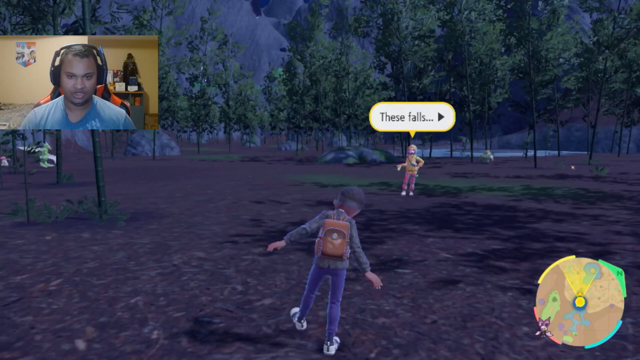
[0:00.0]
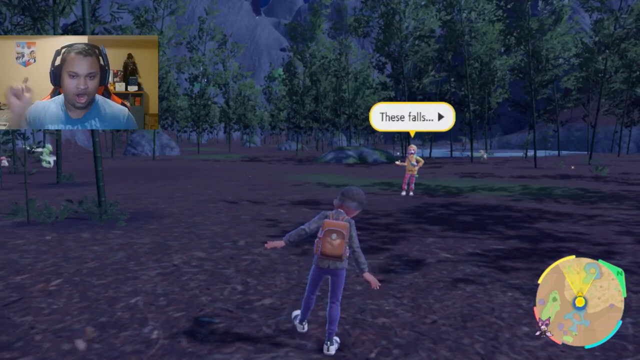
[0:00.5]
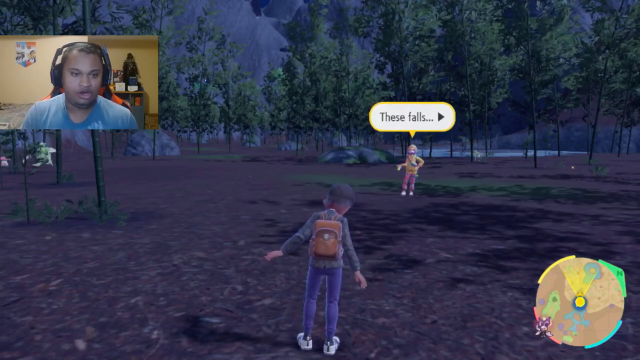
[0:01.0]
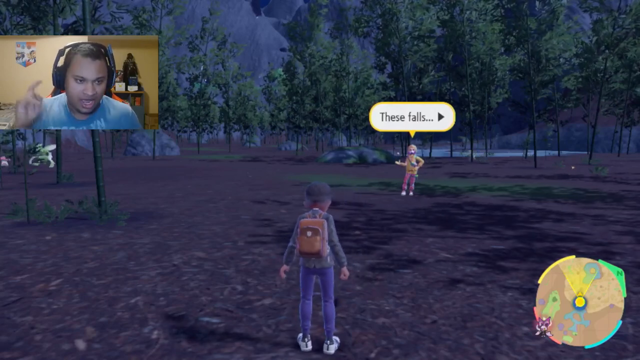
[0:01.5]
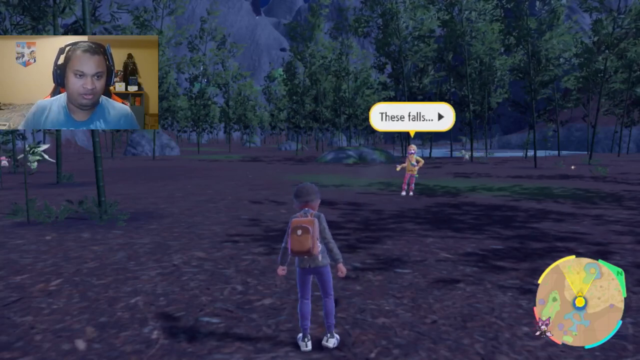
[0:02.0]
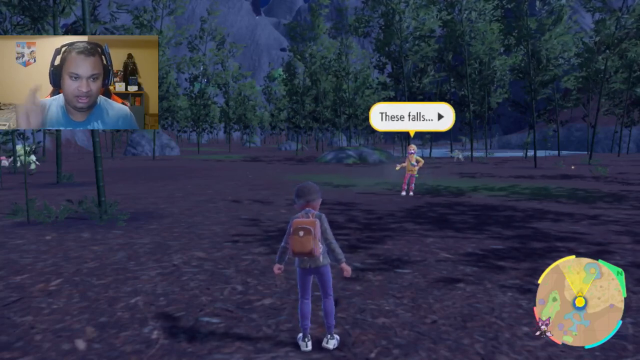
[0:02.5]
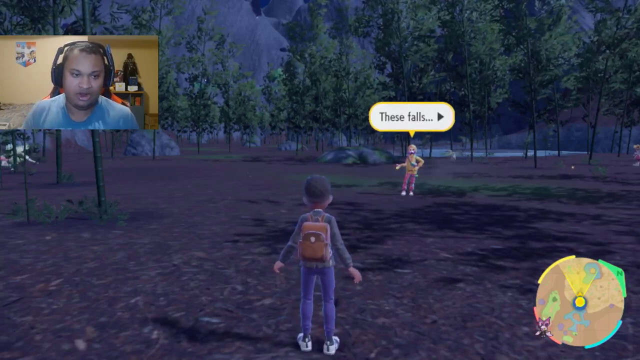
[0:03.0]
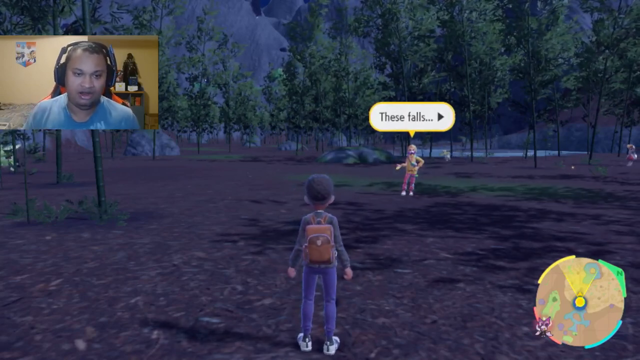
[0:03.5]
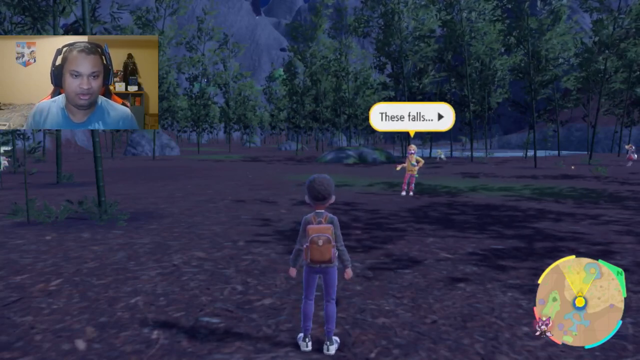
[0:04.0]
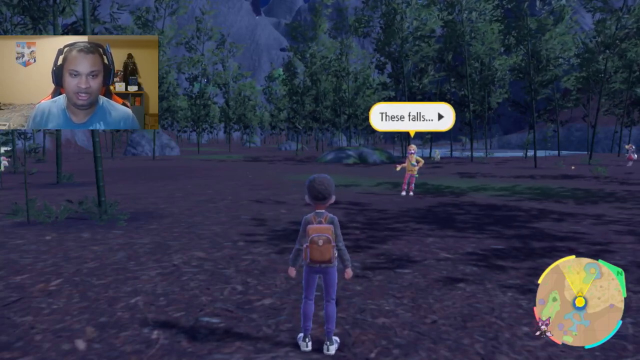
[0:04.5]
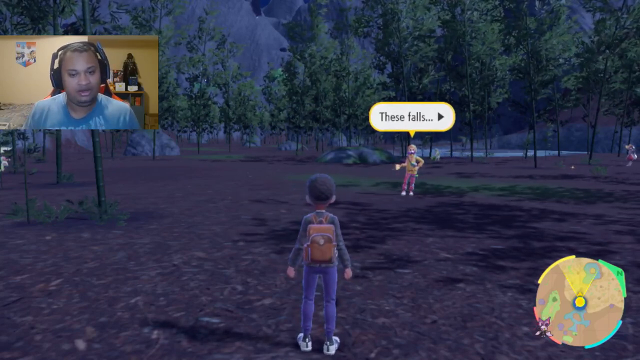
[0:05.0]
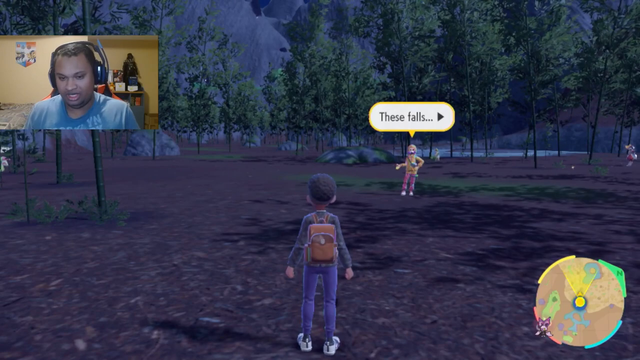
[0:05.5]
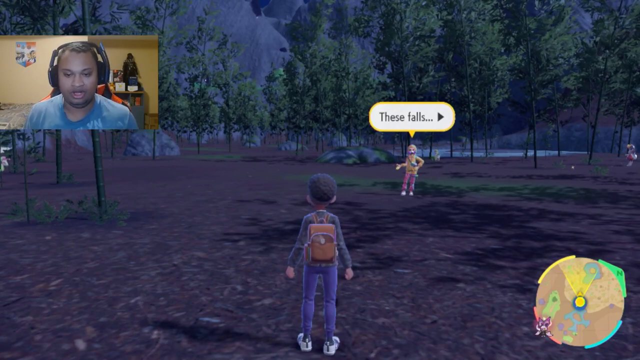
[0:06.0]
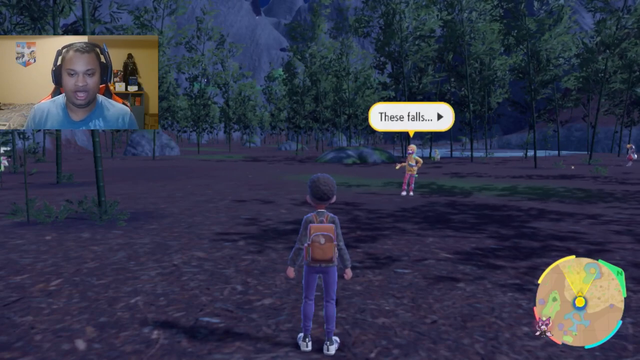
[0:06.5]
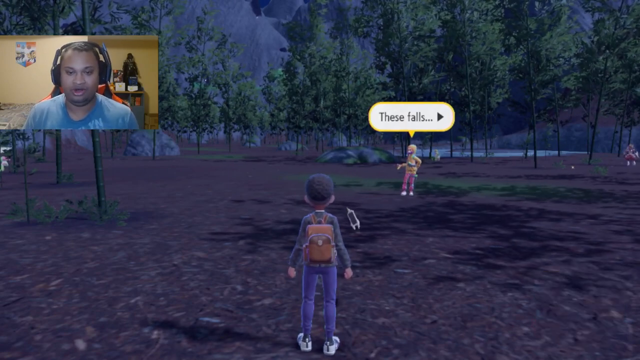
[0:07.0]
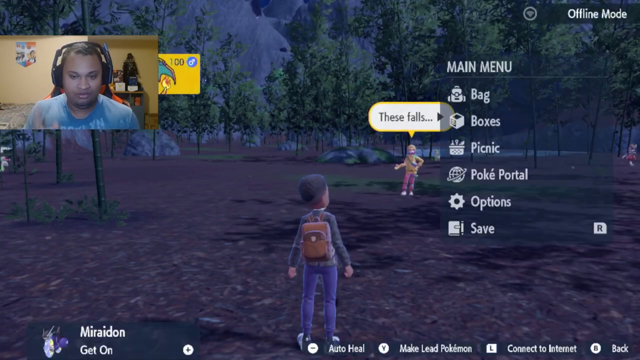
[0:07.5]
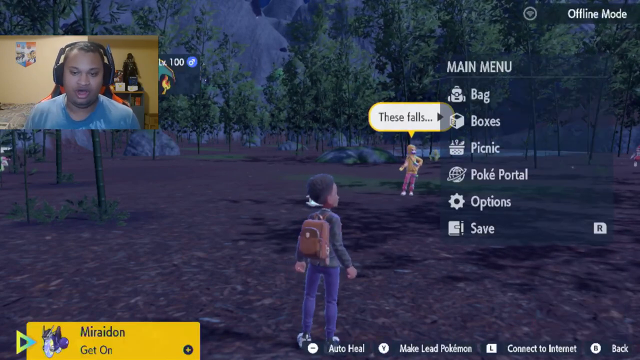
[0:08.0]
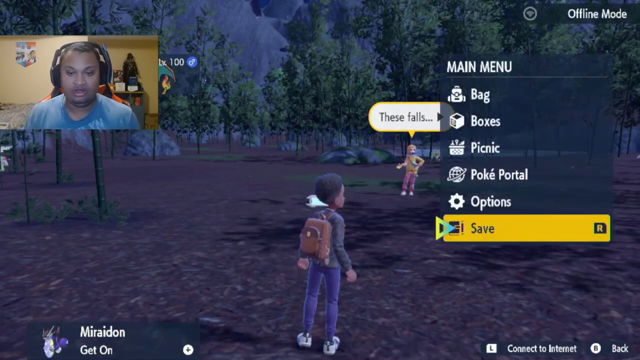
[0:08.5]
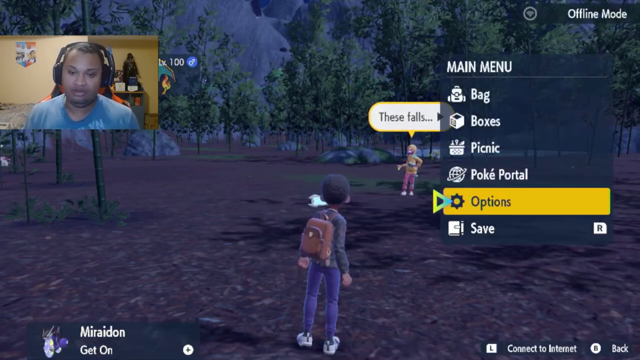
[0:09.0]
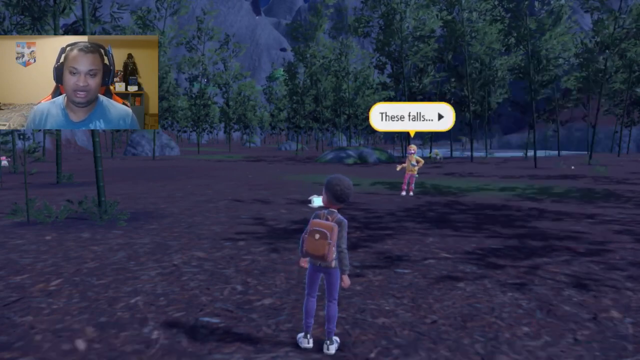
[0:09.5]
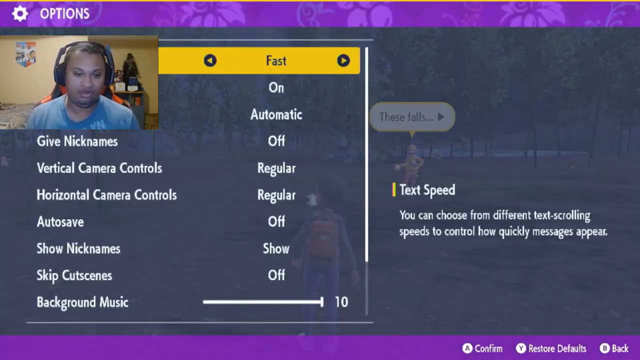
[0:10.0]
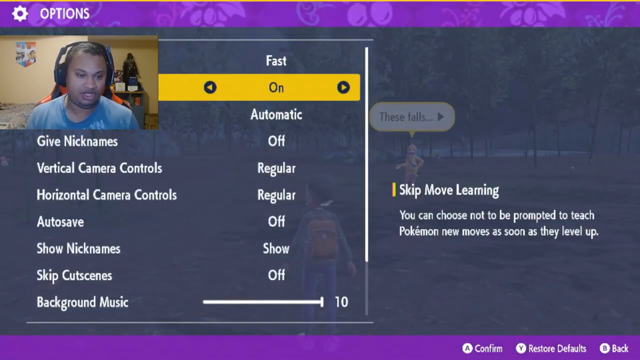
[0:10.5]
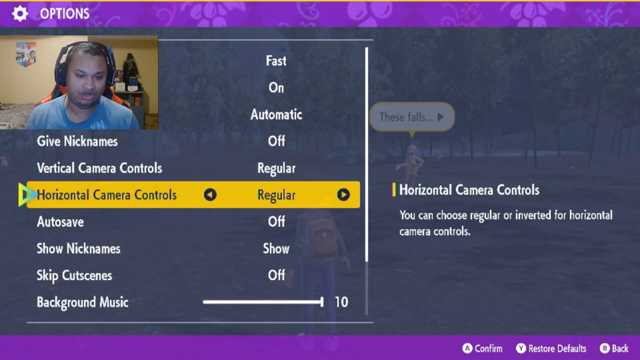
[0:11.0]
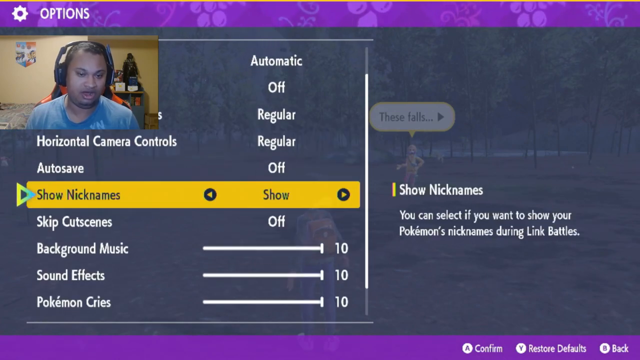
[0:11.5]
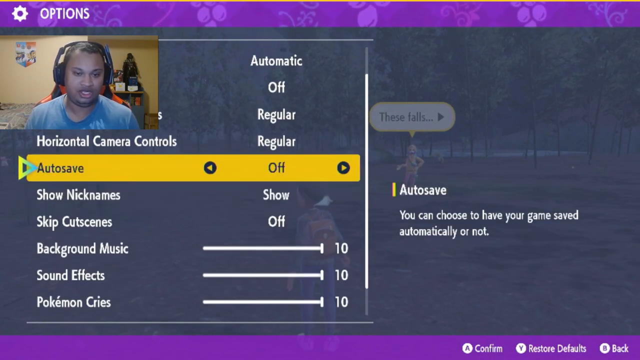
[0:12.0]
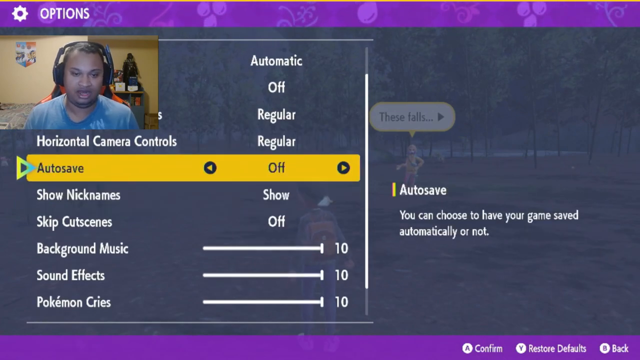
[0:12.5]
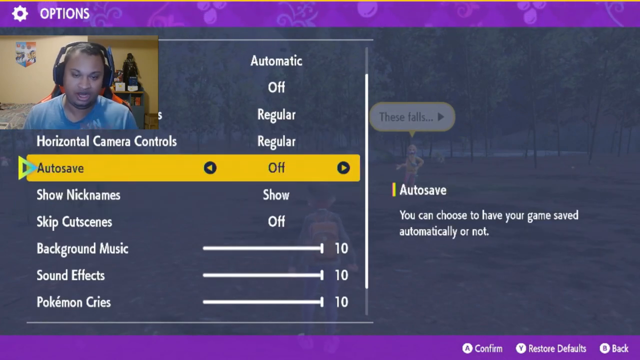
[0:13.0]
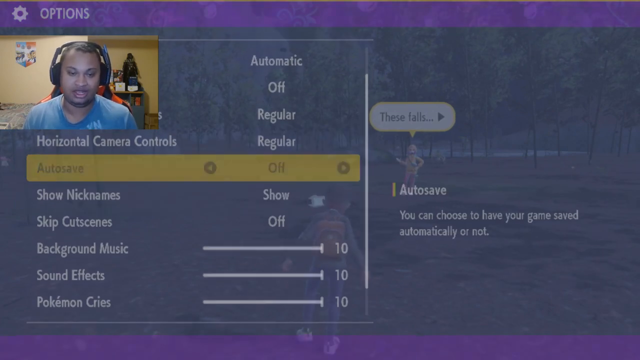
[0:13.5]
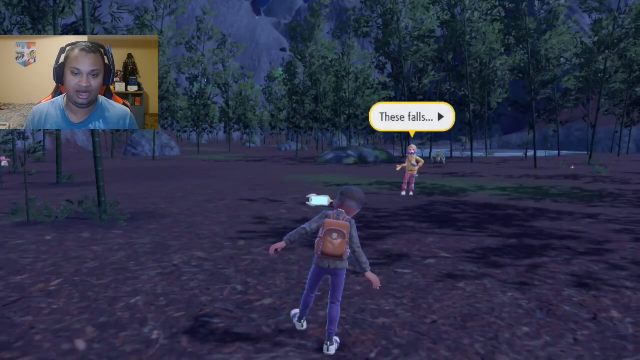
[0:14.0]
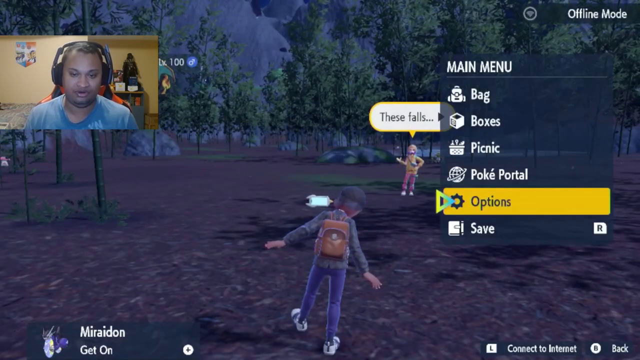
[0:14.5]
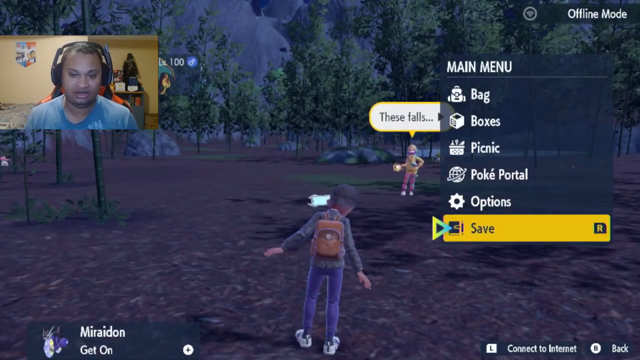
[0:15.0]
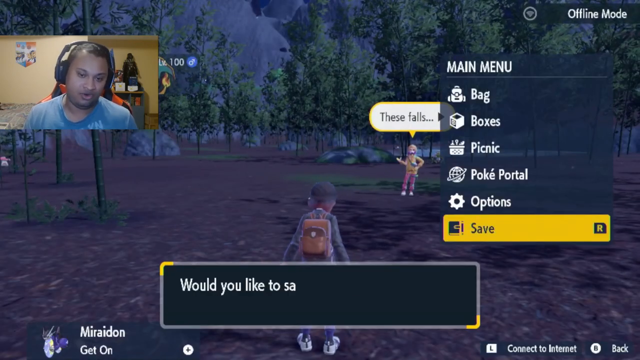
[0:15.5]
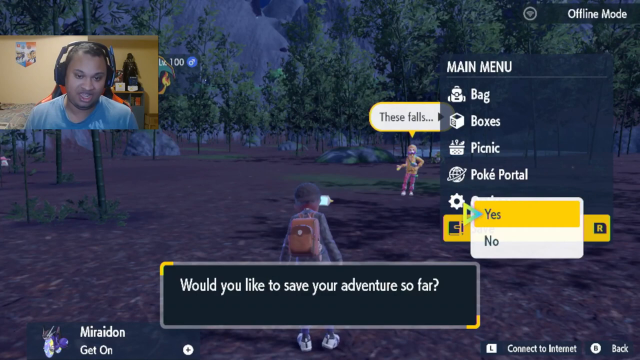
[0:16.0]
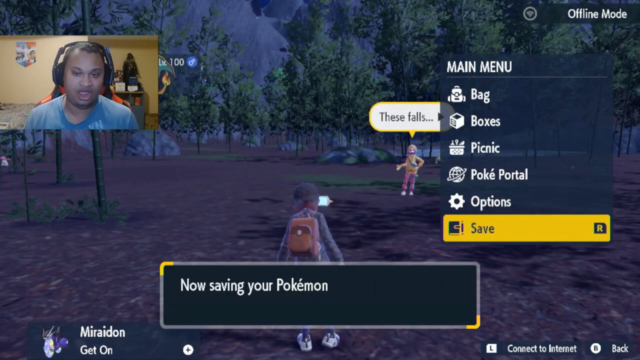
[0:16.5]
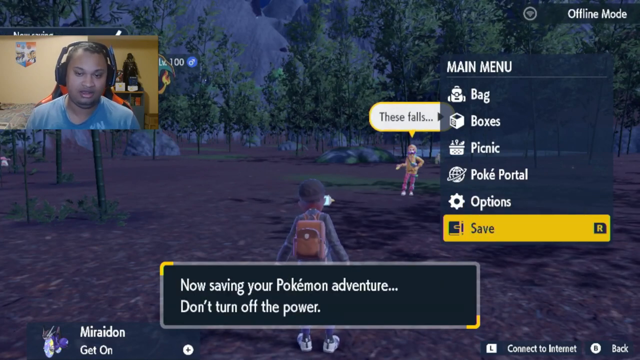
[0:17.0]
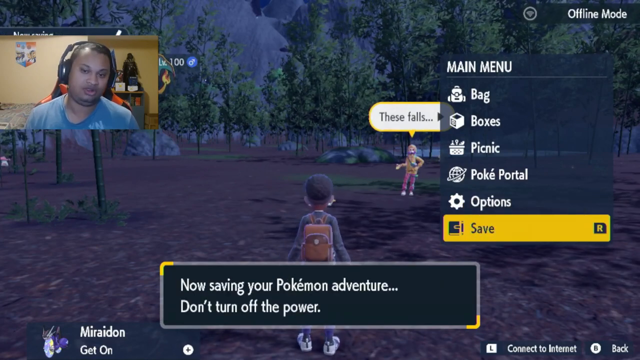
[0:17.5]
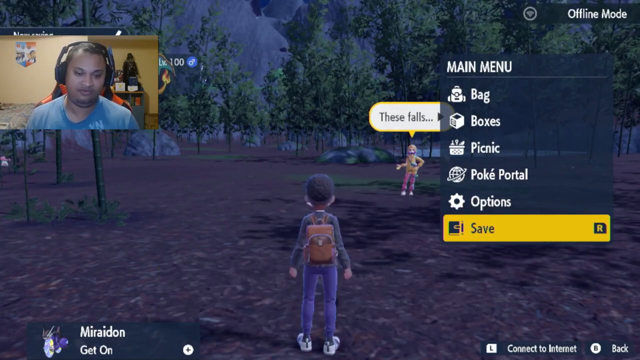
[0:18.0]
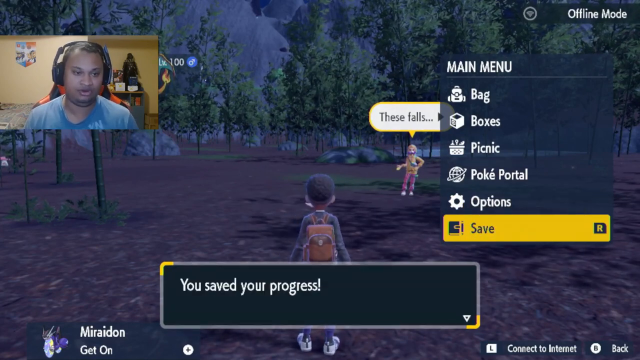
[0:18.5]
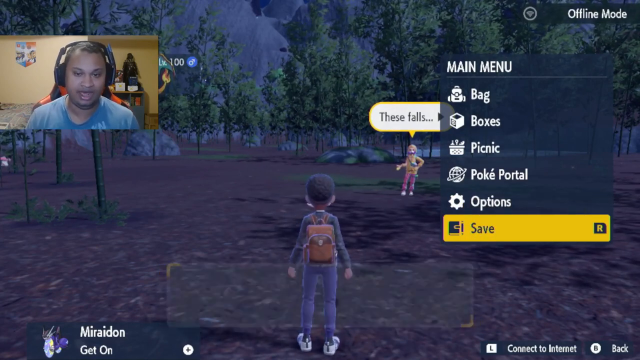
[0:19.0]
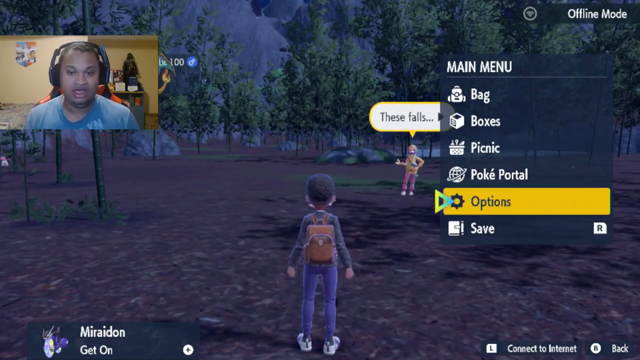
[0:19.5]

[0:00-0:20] A live play or live stream of a video game, possibly on Twitch, is shown. A host who looks like an Asian man with short hair wears headphones and rapidly describes what he is playing. The game scene looks like a school playground or some kind of park. The player character faces away from the viewer and looks like a young black boy, presumably the host's avatar; he faces a white character standing very far away, who looks like a female with blonde hair and pink pants. The main character has a brown backpack, short hair, purple pants, a black long-sleeve shirt, and black and white tennis shoes. The host goes through all kinds of menus to pick different ways to respond to questions from the character in the distance, picking lots of options, apparently to customize the character and choose how to save the game.